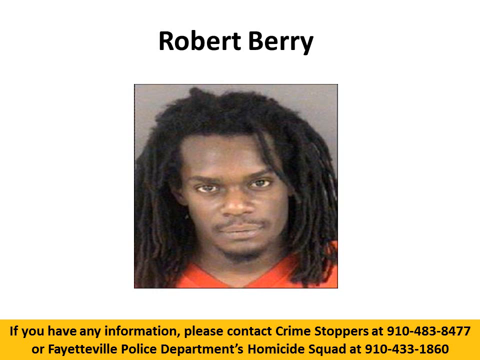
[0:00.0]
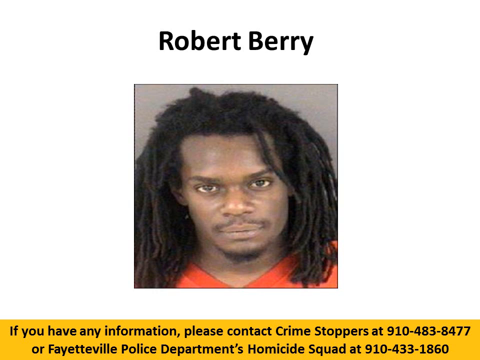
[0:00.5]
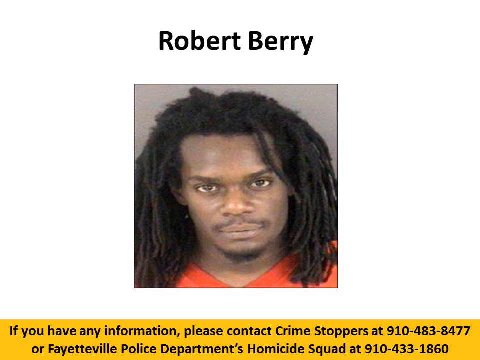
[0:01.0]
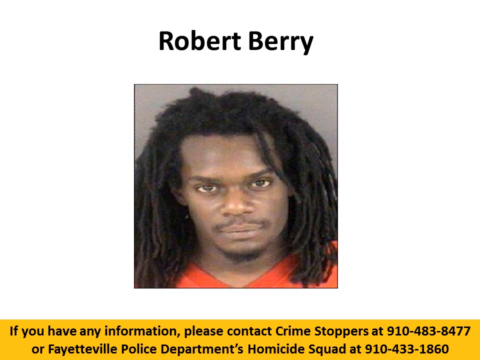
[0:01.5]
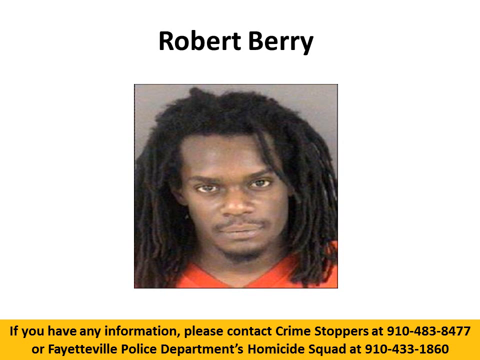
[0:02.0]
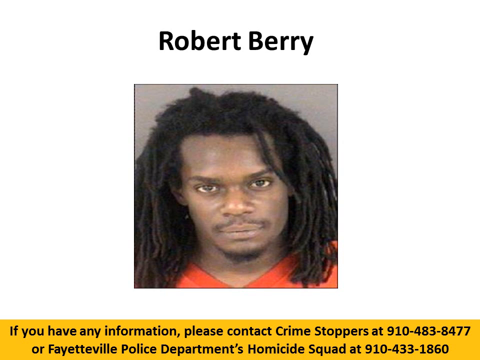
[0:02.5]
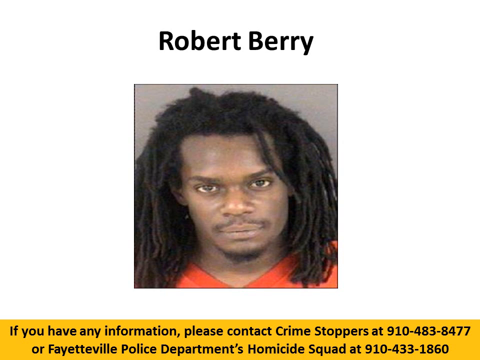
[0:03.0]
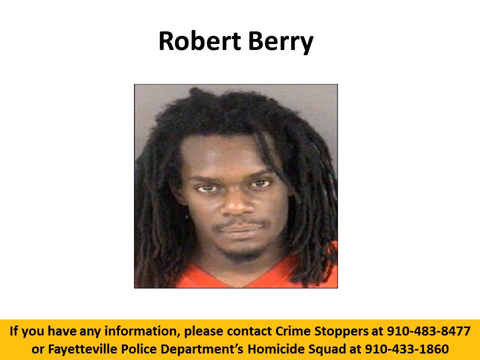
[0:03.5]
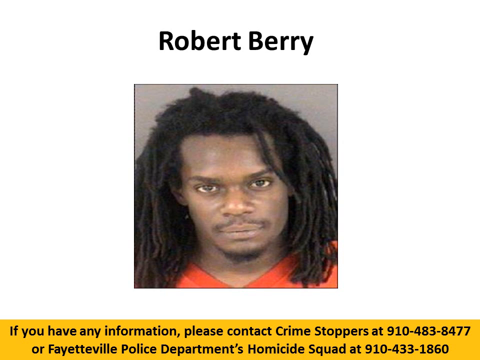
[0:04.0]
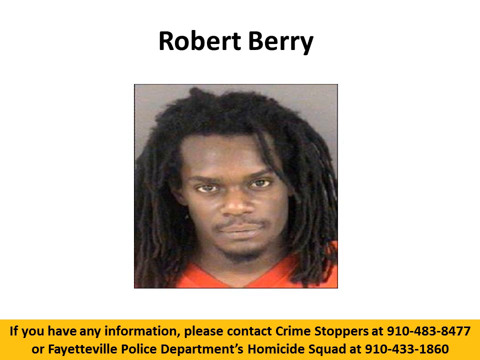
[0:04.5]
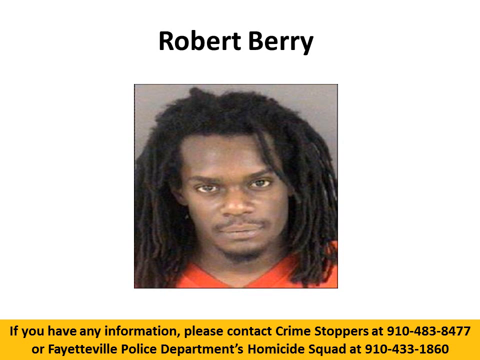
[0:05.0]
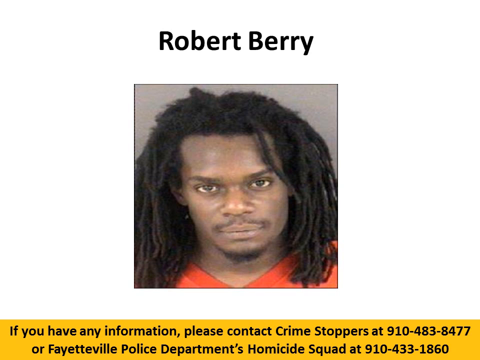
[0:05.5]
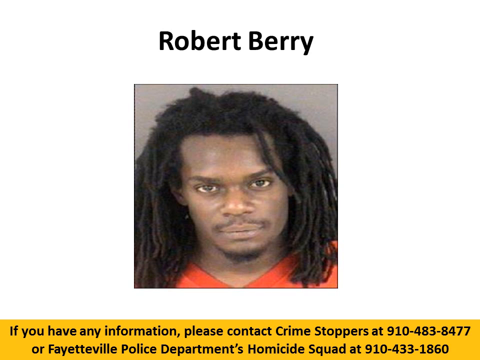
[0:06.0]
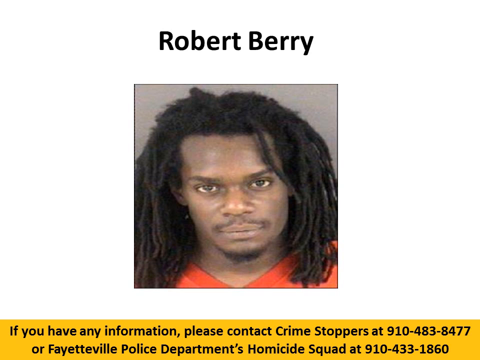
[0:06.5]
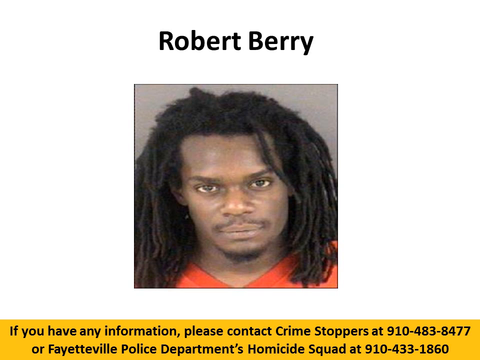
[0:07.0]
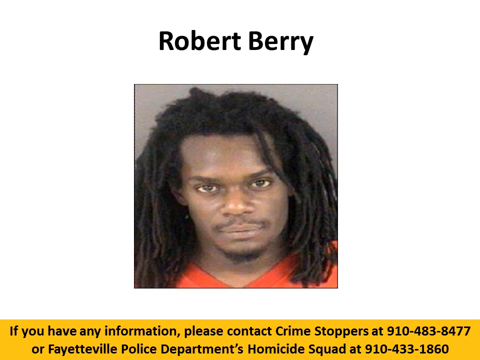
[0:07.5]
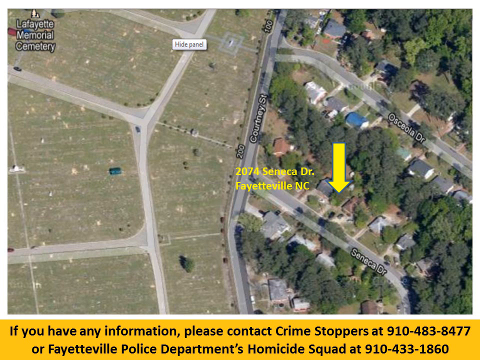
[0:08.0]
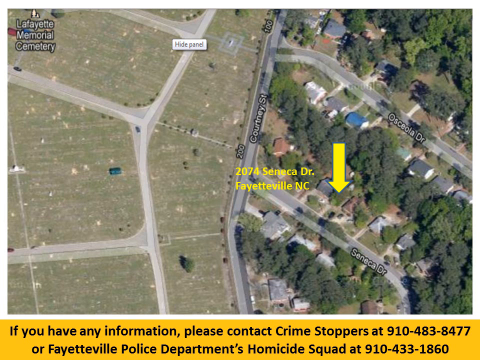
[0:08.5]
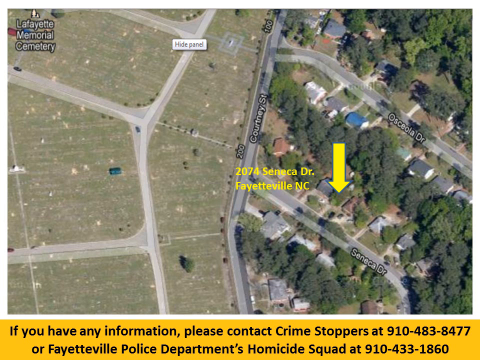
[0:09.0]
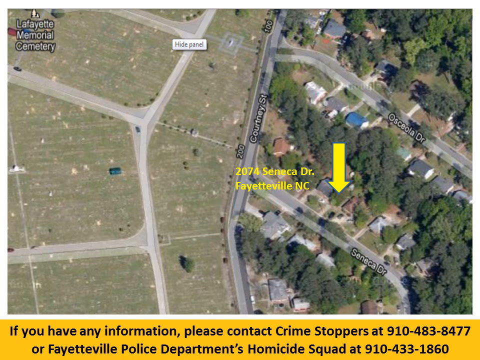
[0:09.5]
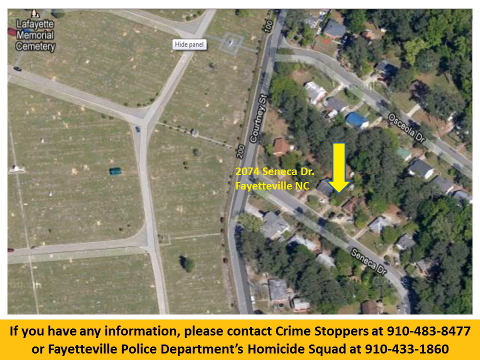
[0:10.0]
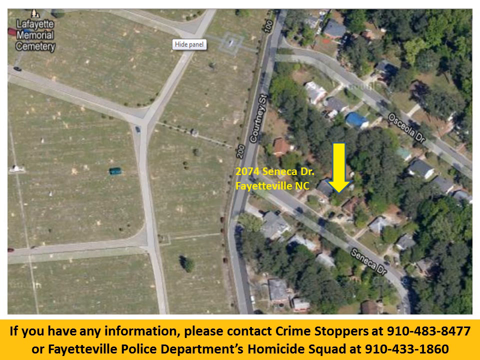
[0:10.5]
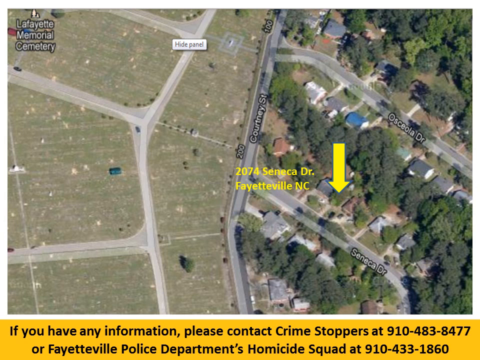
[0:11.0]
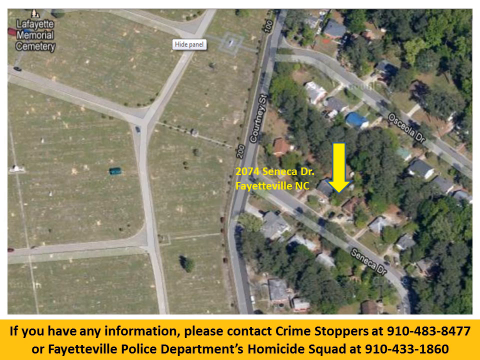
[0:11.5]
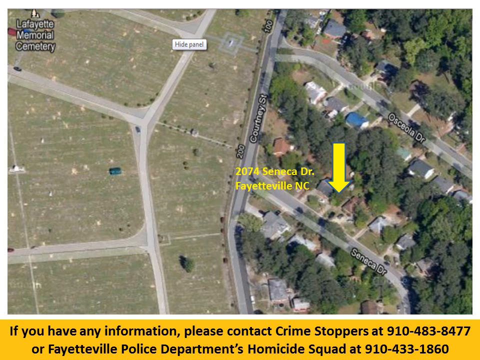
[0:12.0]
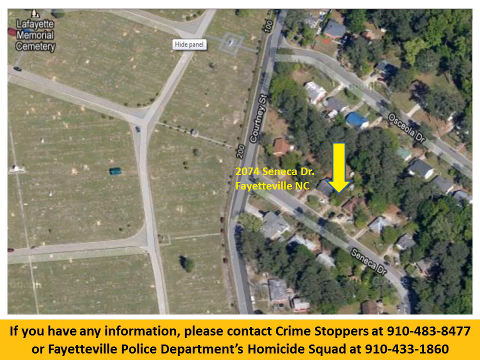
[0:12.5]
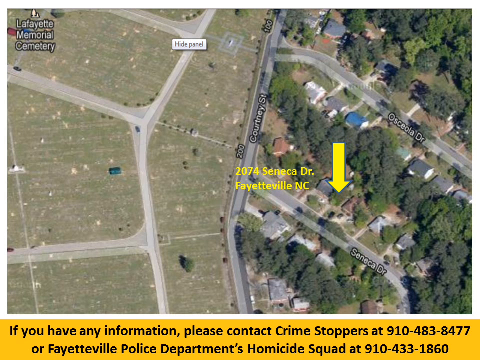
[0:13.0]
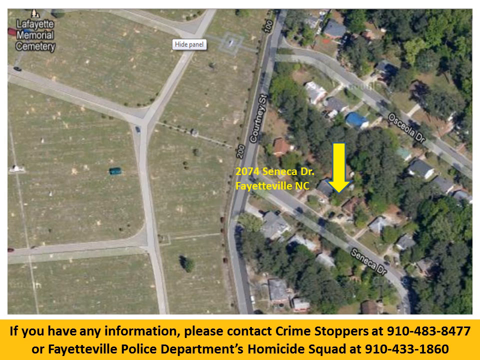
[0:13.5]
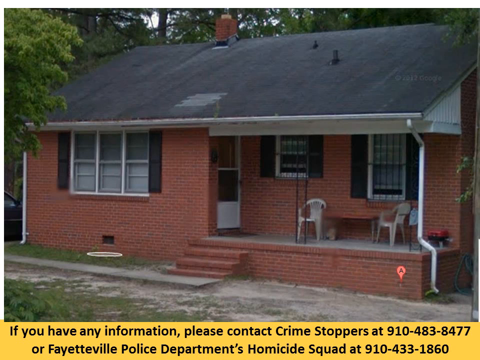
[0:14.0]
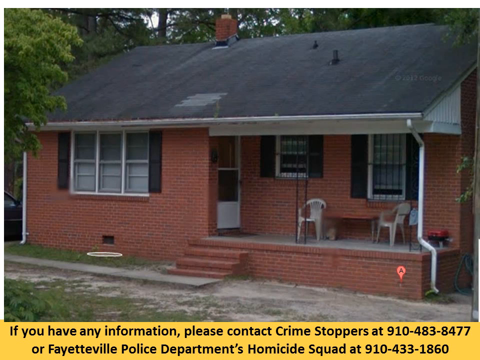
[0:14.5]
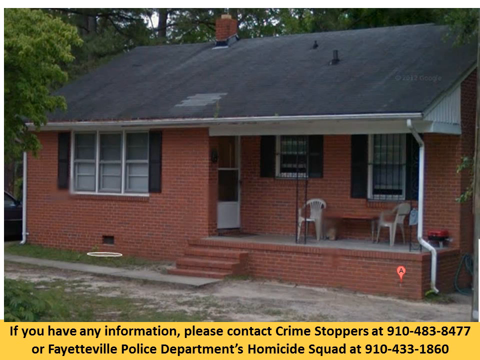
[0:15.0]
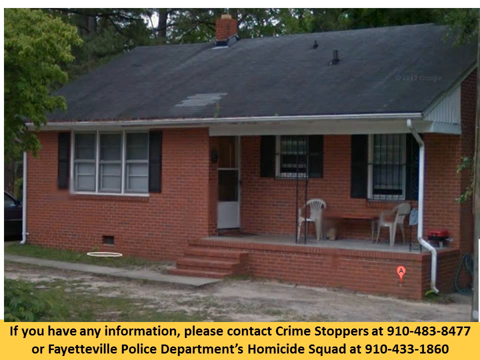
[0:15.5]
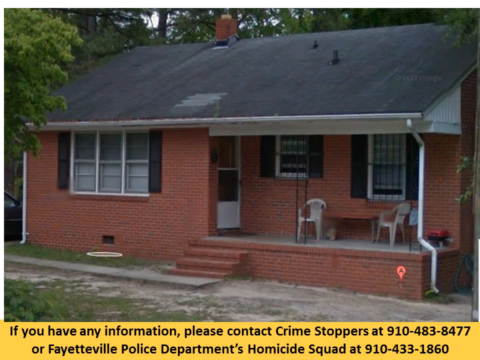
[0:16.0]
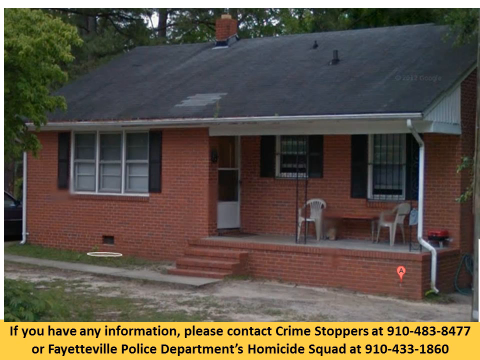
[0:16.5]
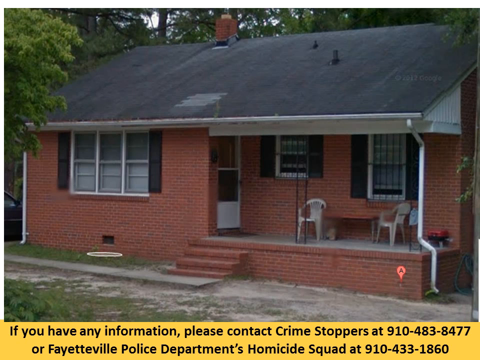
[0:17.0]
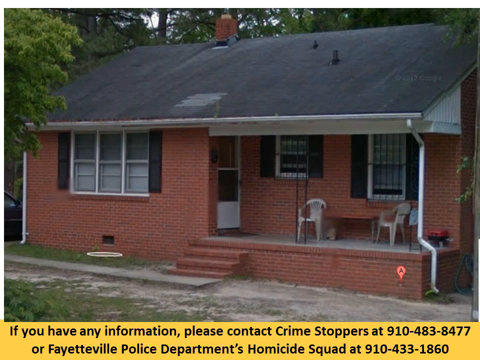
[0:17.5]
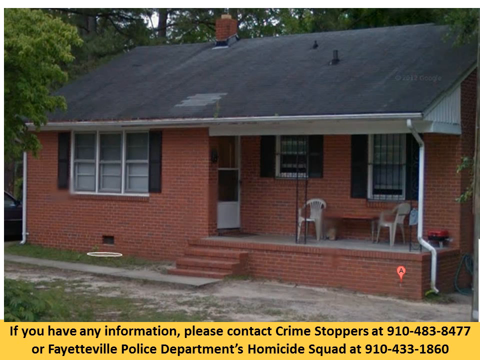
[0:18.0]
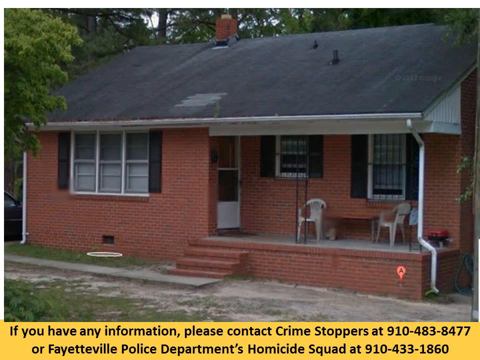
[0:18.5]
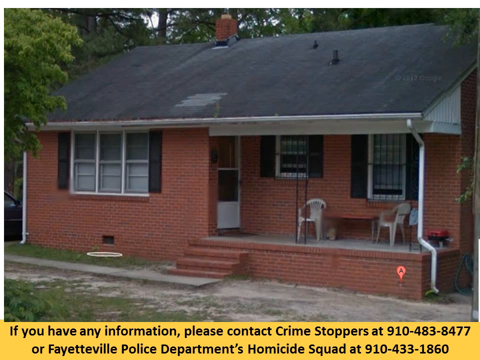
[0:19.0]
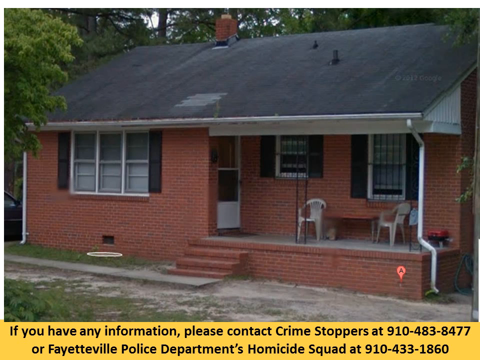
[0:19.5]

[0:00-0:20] The video opens on an image of an African-American man wearing what looks like an orange shirt, possibly; only a very small portion of the shirt is visible. The next image is an aerial shot of a city. There are multiple houses to the right, with lots of trees and greenery in the area where the houses are. Text on the screen reads "2074 Seneca Drive, Fayetteville, North Carolina," and a yellow arrow points to a house in the aerial shot. Two chairs are sitting on a porch outside the house. To the right and to the left of the screen there appears to be a field, and there are street areas.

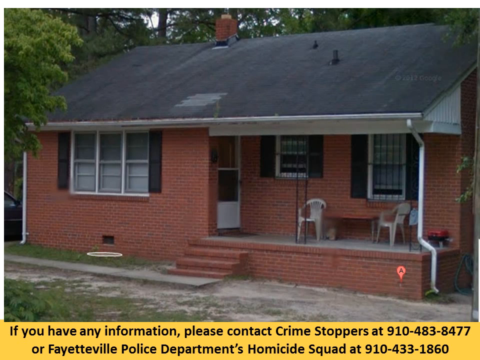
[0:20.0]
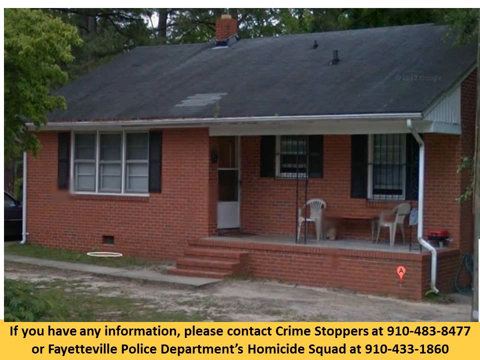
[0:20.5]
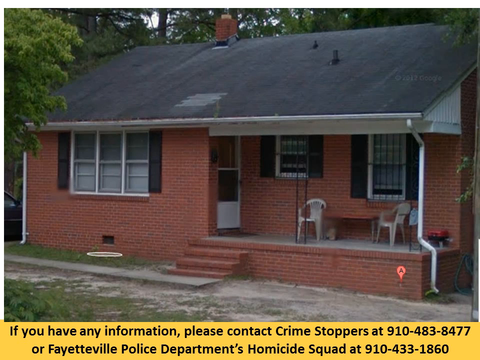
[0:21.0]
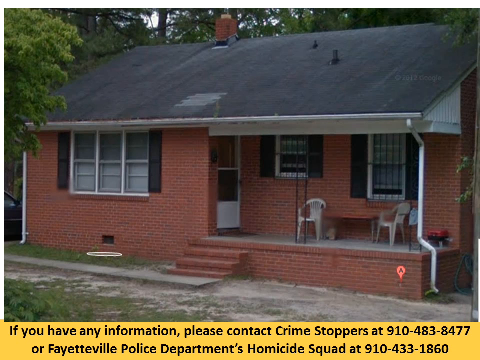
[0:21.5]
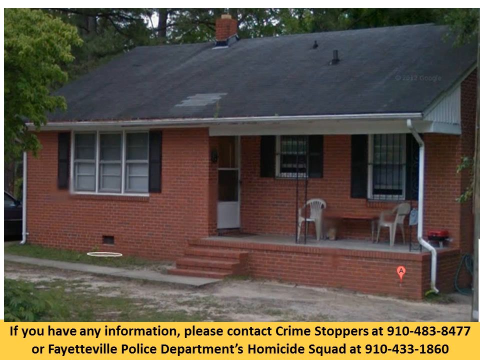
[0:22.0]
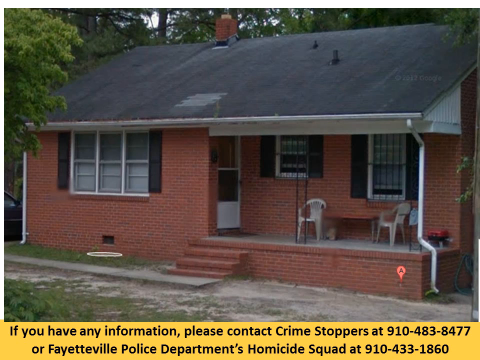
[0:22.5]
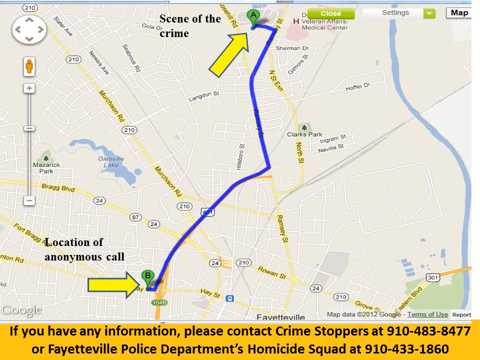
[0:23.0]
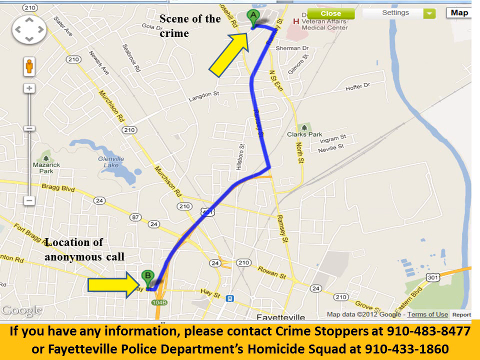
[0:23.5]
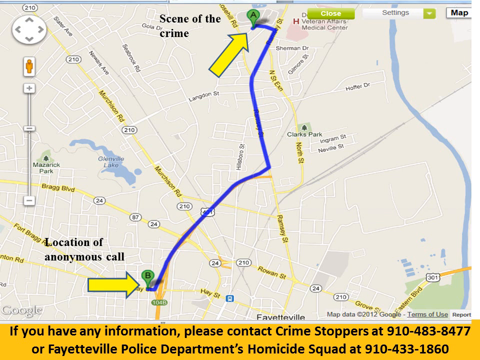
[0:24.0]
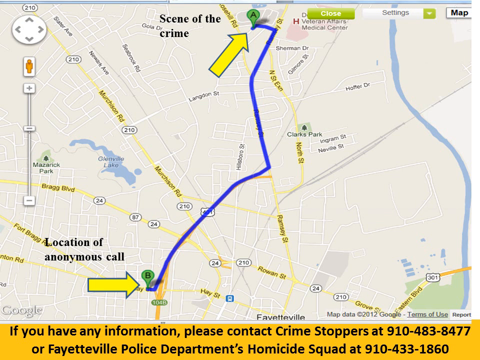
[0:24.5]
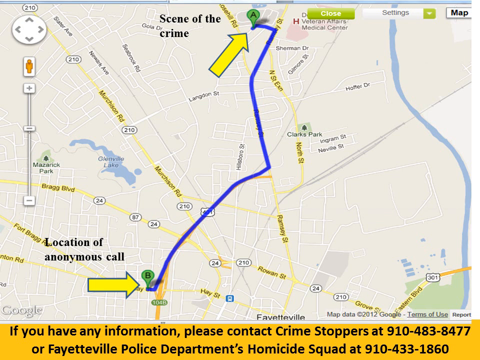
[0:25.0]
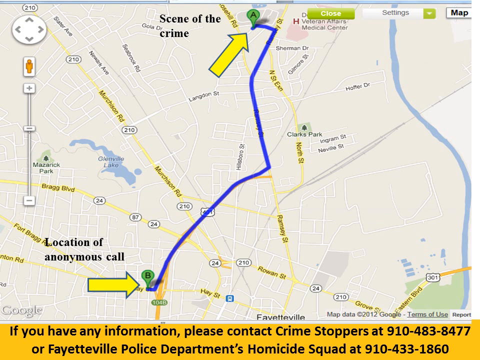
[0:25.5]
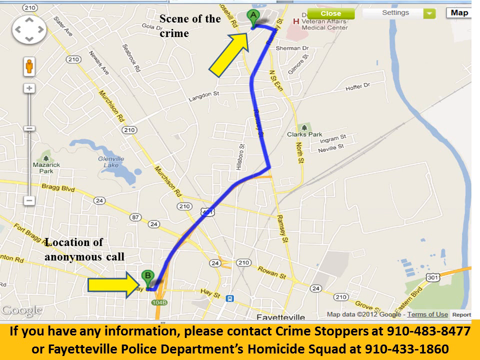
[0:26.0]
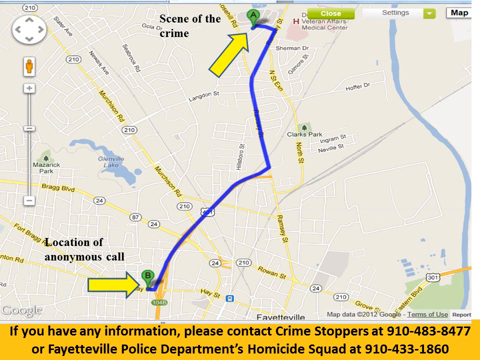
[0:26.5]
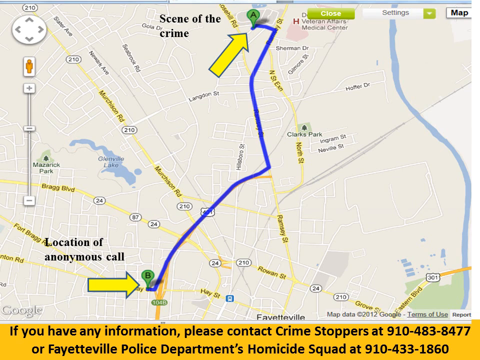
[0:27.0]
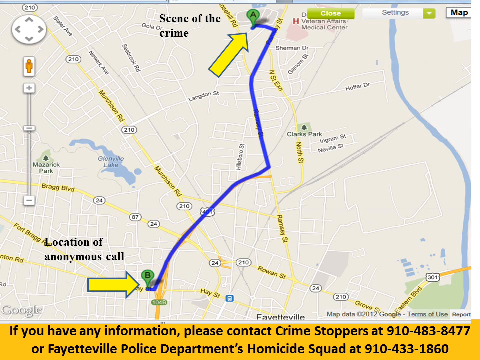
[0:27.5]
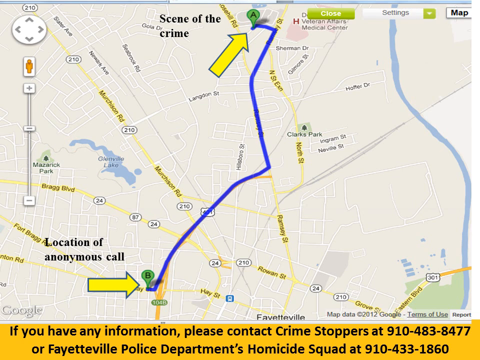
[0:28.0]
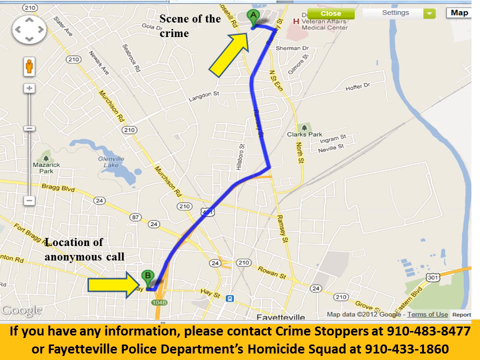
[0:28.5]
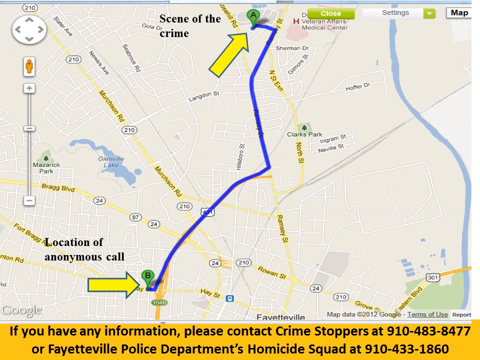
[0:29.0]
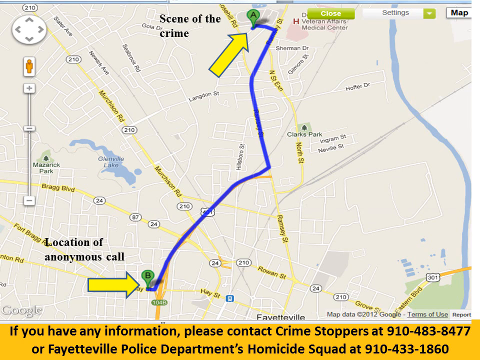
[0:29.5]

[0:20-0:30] A small house is shown. It has a porch with two chairs sitting on it, and four steps lead up to the house. On the porch there are two windows, both with thin bars. To the left of the windows is a door with a large window portion that can be seen into; it is white at the very bottom. There are sparse amounts of grass in the front yard area. Next comes an image of a map with large yellow arrows. Above one of the arrows is the text "location of anonymous call," pointing to a location on the map, and the other yellow arrow says "speed at the time."